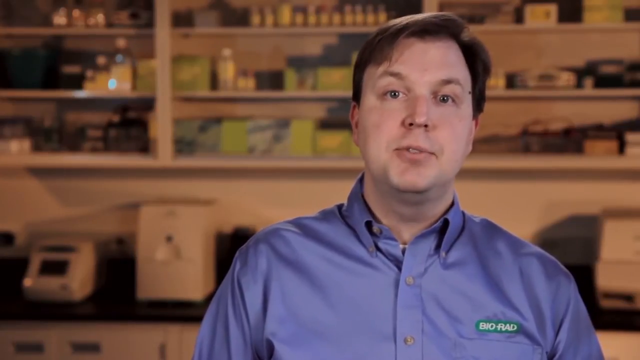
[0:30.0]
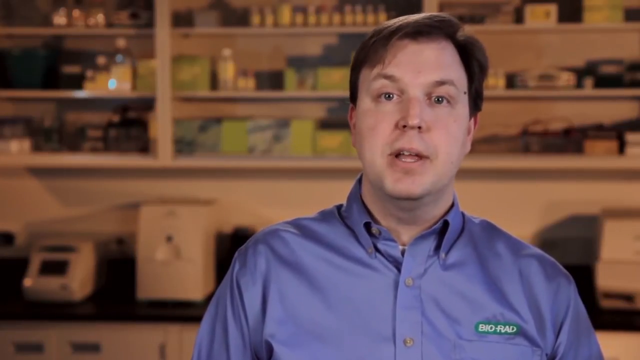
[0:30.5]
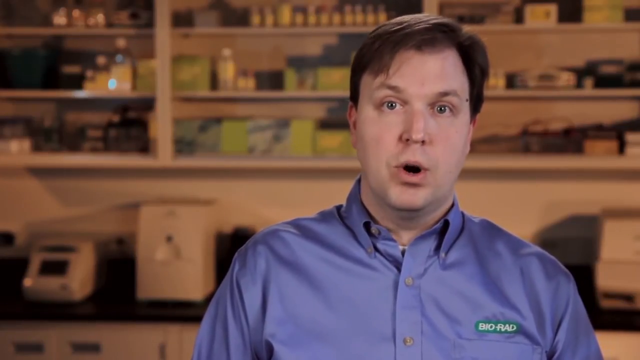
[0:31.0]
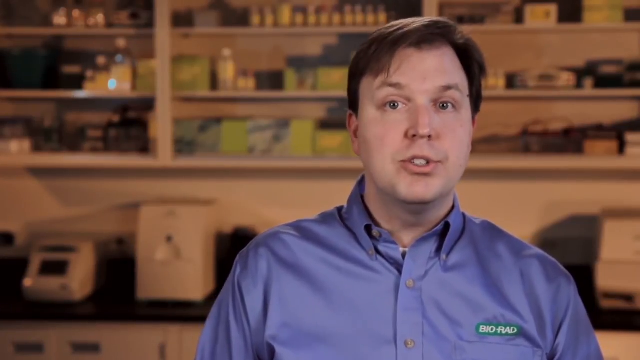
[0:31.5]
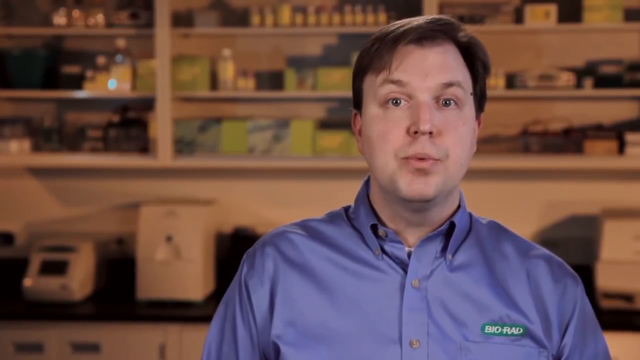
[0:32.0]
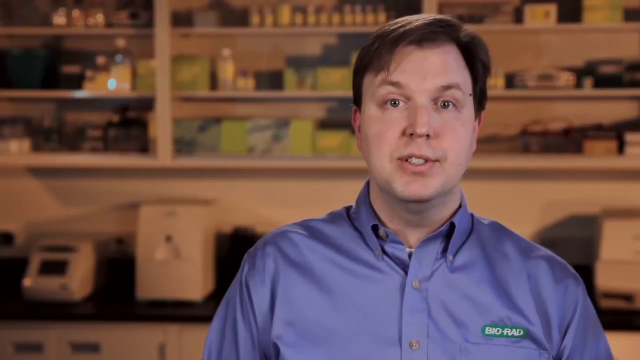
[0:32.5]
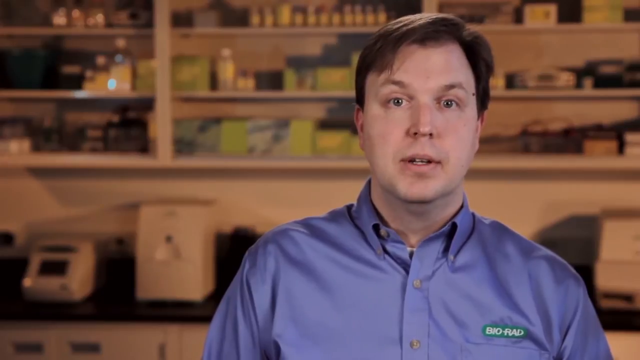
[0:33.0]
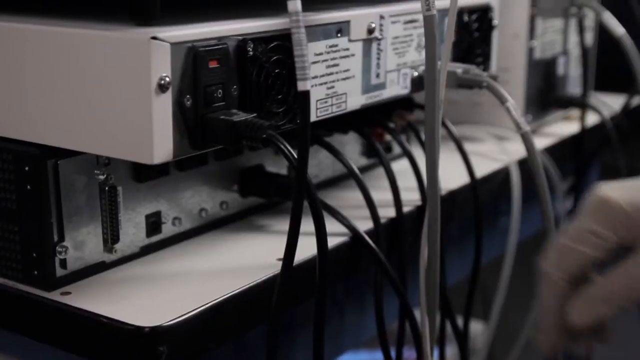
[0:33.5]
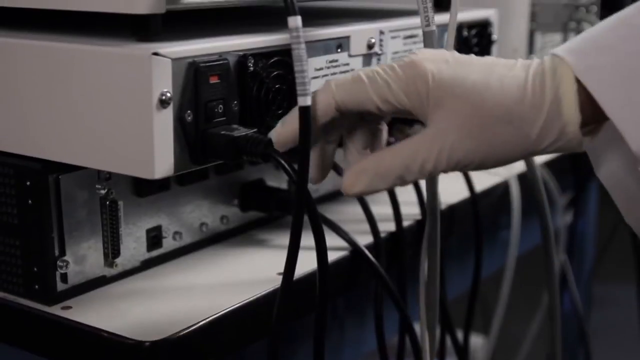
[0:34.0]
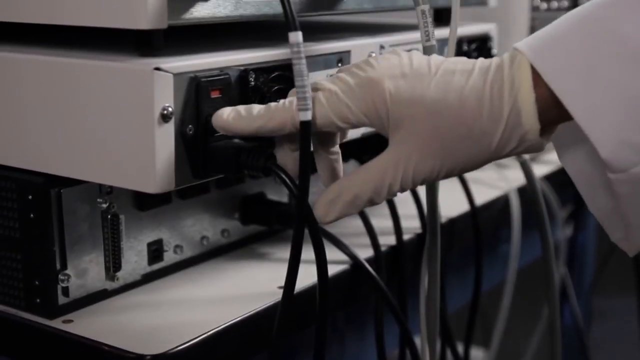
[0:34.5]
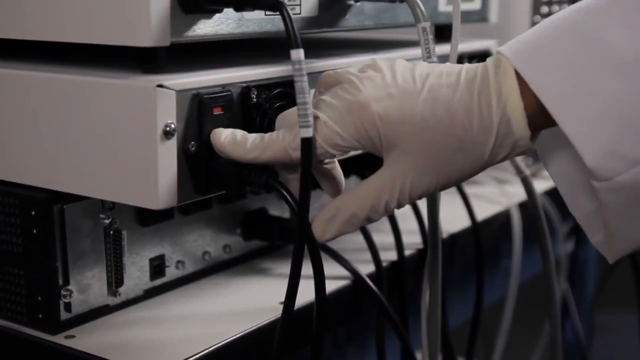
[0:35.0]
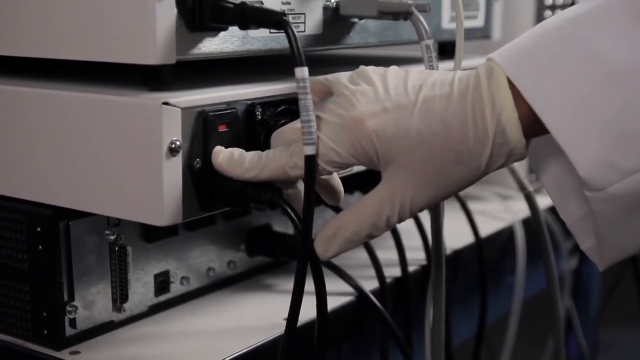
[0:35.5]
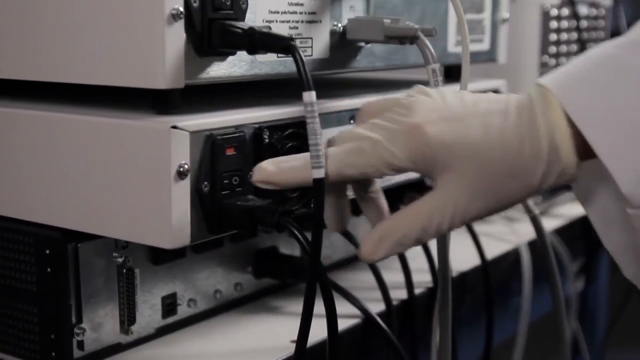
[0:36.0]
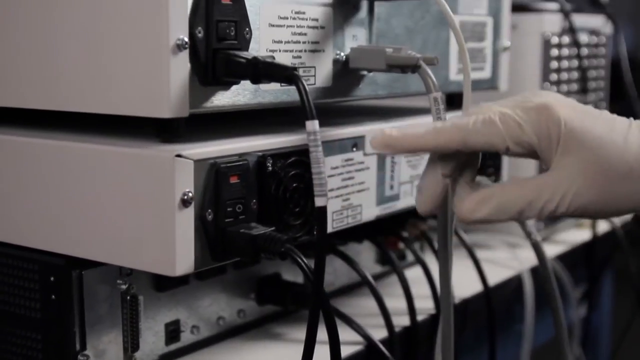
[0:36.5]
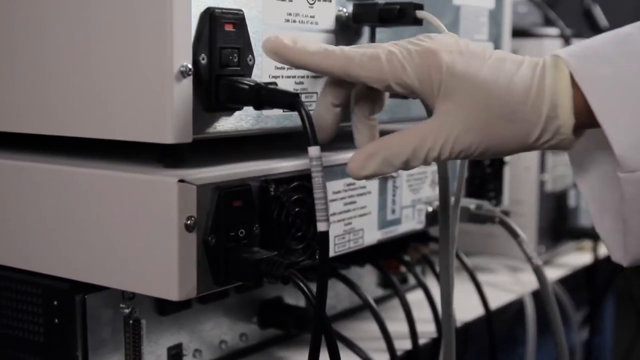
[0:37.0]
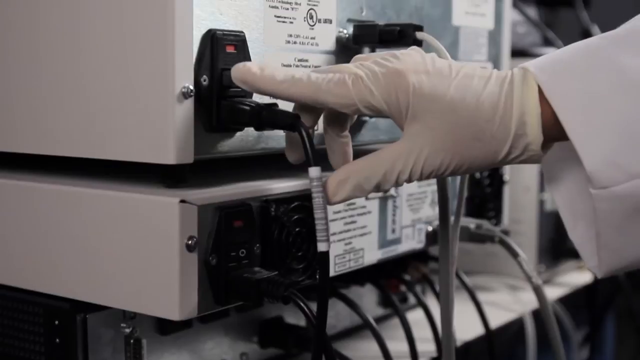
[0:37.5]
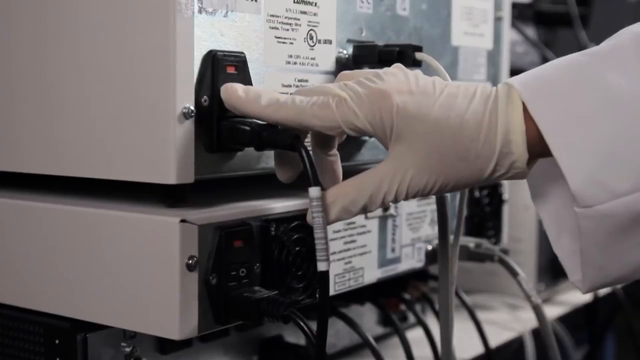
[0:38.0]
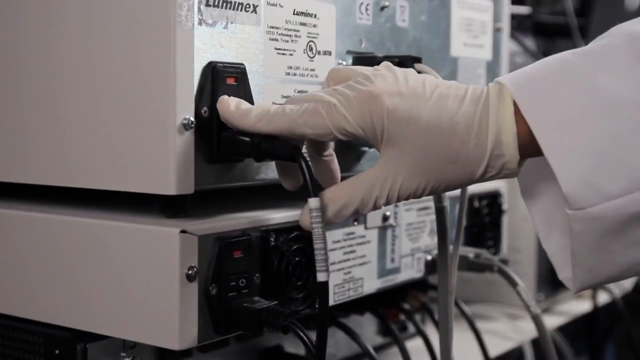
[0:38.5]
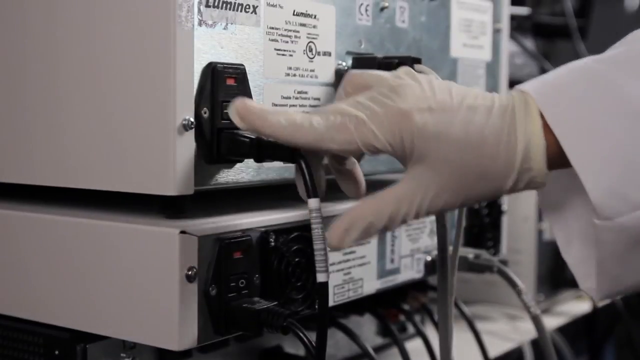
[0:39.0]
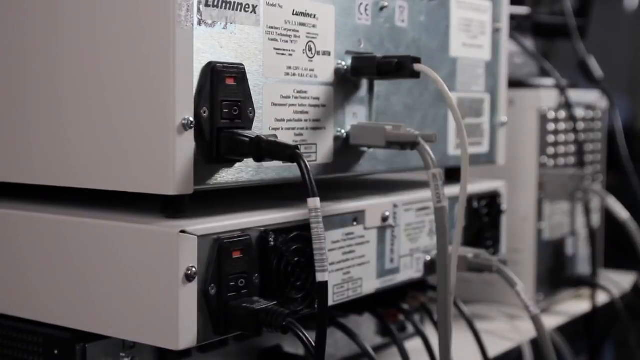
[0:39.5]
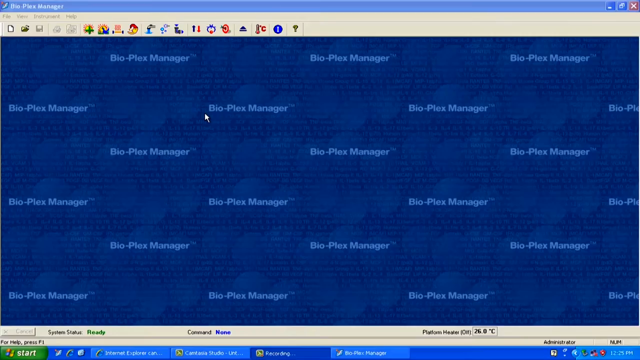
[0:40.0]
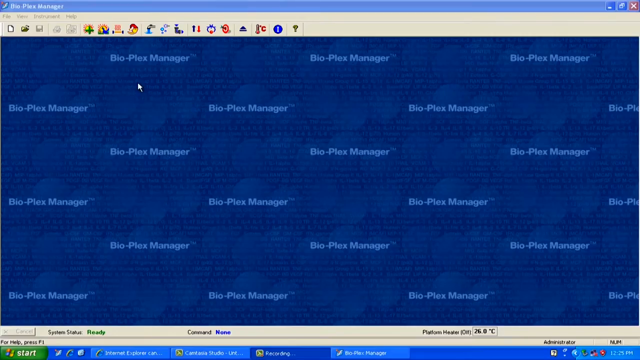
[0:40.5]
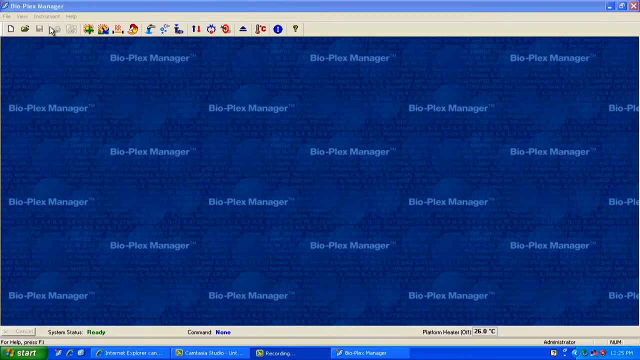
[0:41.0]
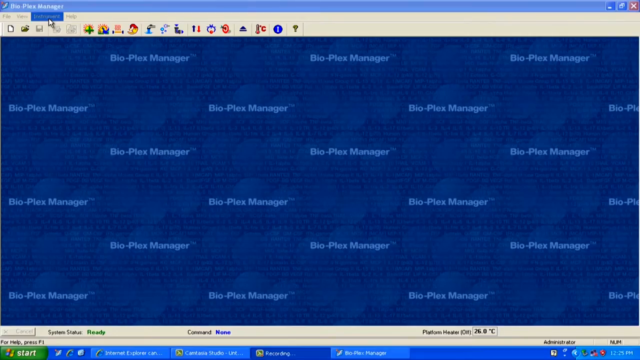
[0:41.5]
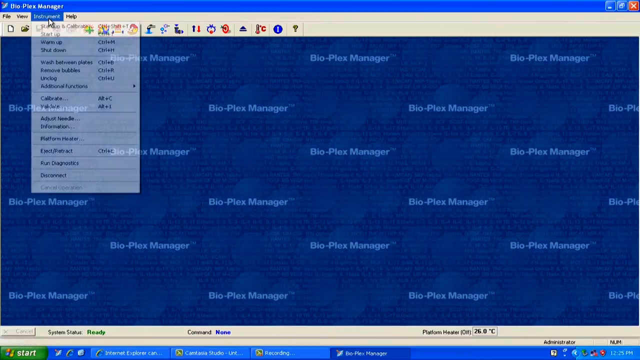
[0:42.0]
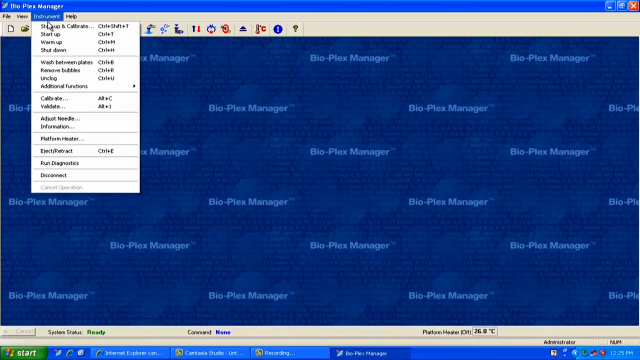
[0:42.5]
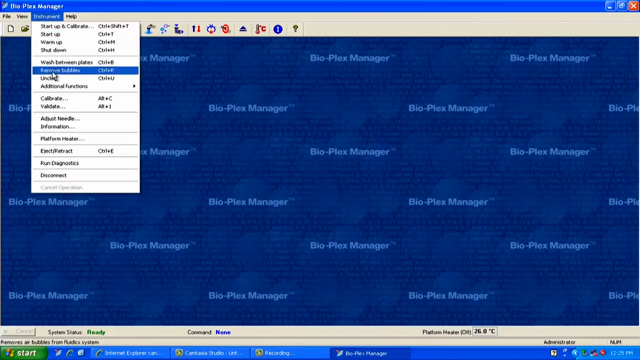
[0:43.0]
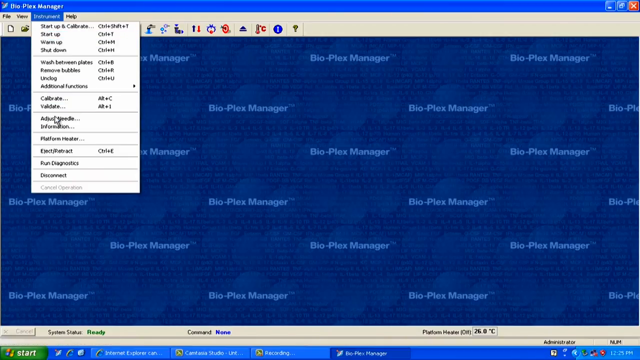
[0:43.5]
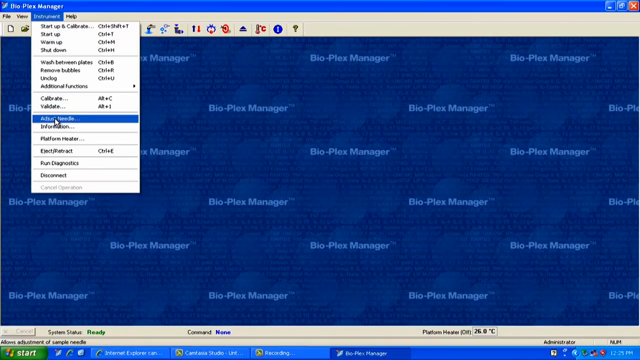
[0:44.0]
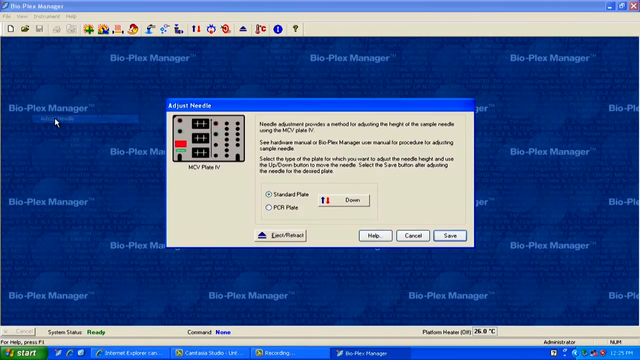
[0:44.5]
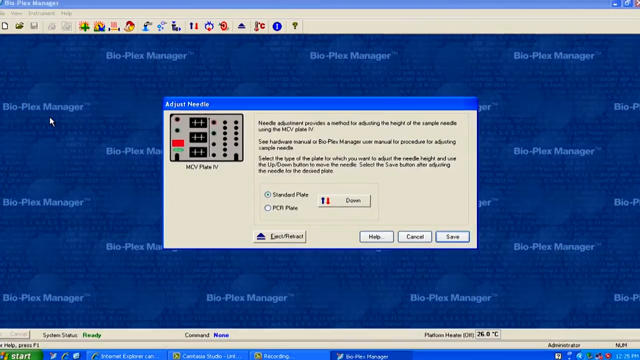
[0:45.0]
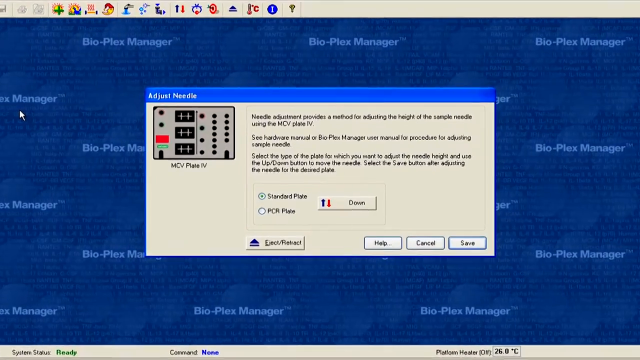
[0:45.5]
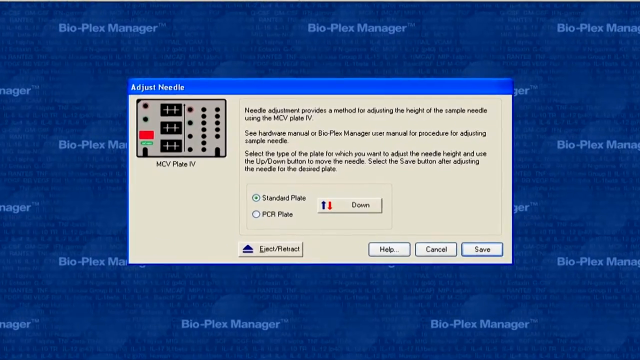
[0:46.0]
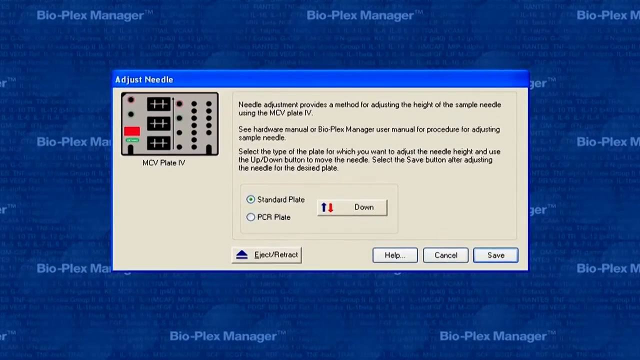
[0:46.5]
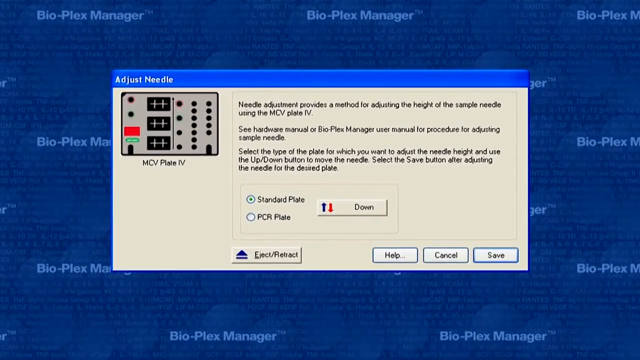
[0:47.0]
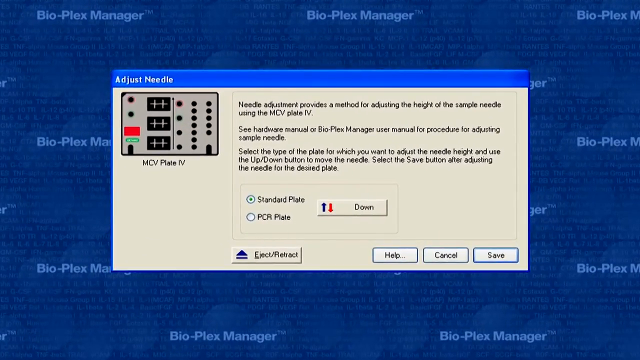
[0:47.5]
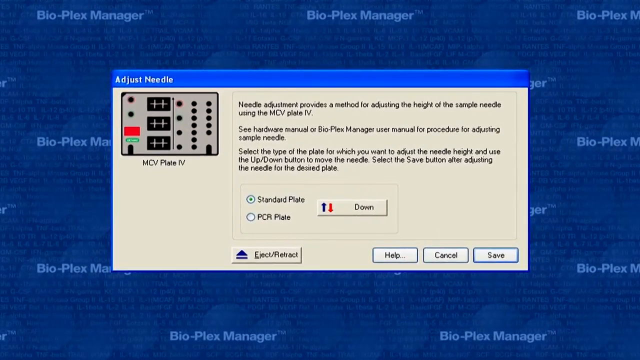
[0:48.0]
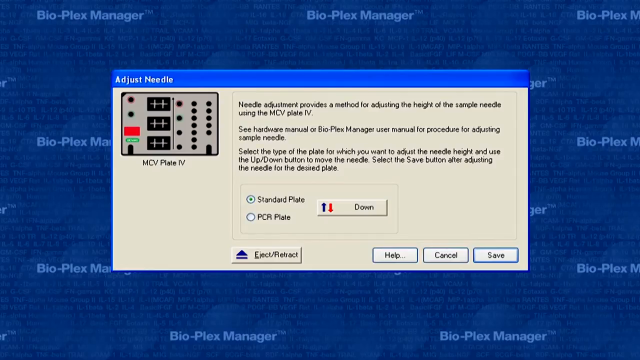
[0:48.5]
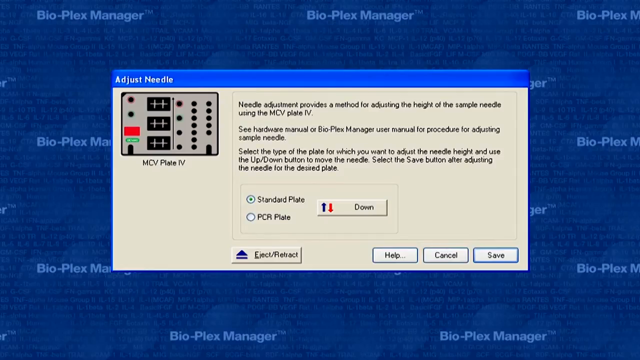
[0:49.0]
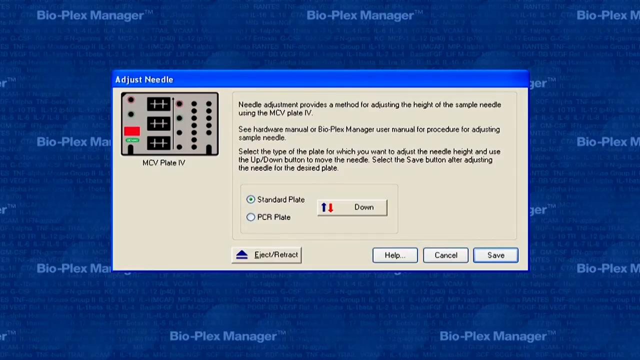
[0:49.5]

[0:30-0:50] A man stands in a medical lab or office with shelves full of supplies visible in the background. He is Caucasian, has brown hair and wears a blue collared shirt, and he speaks in the direction of the camera. The video fades to a lab person in a white glove and white lab coat reaching out with their right hand to touch the back of a white computer. The white computer is set atop another machine, which is on a white table, facing left. The gloved hand presses a red switch on the back of the computer with the pointer finger, then moves up and to the right to another white machine atop the white computer, presses a switch at the back of that machine with the pointer finger, and recedes from view to the right. The video fades to a program window titled "Bio-Plex Manager." The window's background is made of 21 instances of the words "Bio-Plex Manager" in white text against blue. The cursor in the middle of the screen moves gently up and to the left to highlight the third option in the upper left corner of the window. A list of options appears beneath as the cursor moves down, highlighting several of them and finally hovering over the sixth option from last. A pop-up appears in the middle of the window, and the camera zooms in toward the pop-up, which is titled "Adjust Needle."